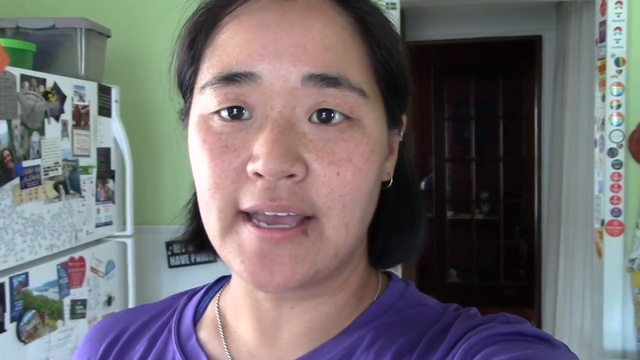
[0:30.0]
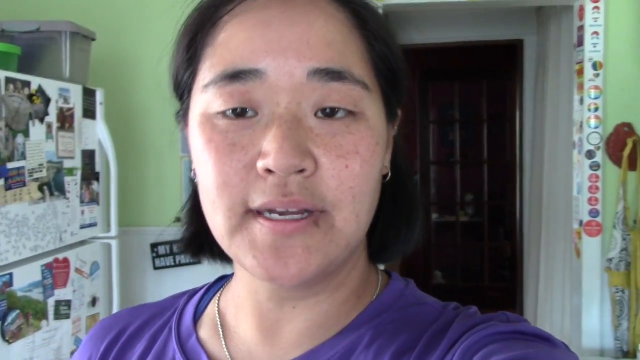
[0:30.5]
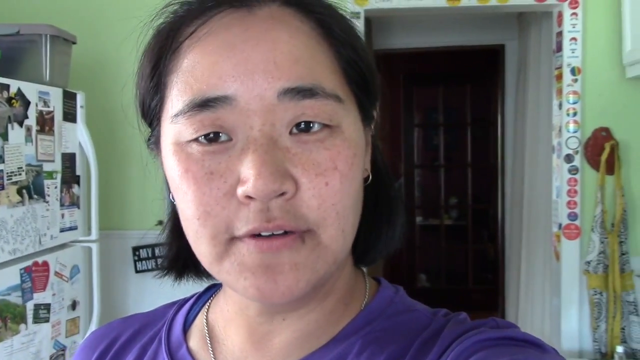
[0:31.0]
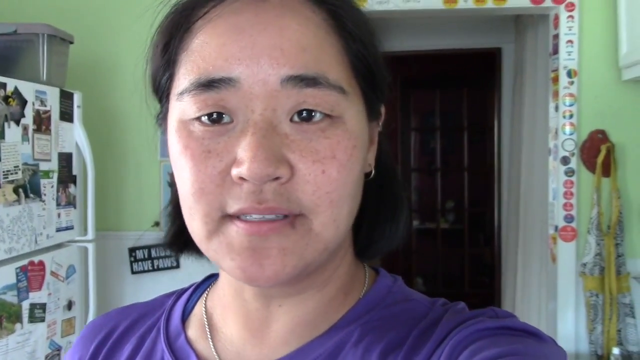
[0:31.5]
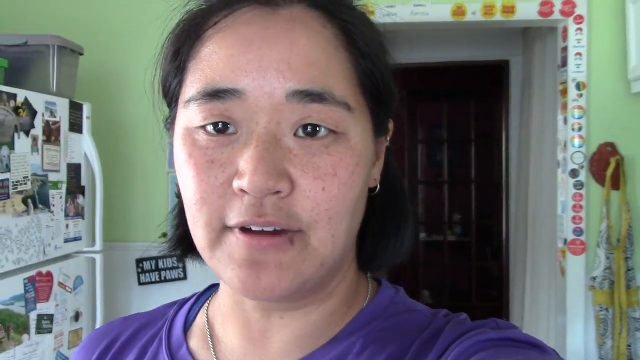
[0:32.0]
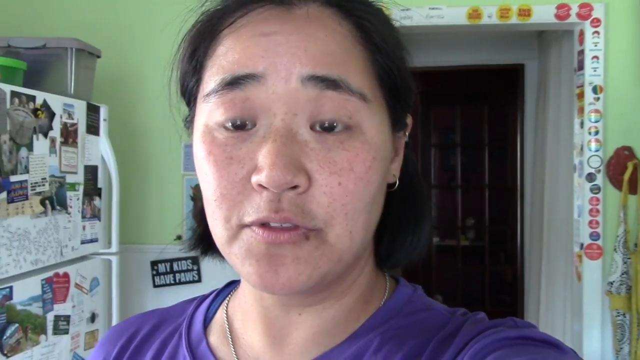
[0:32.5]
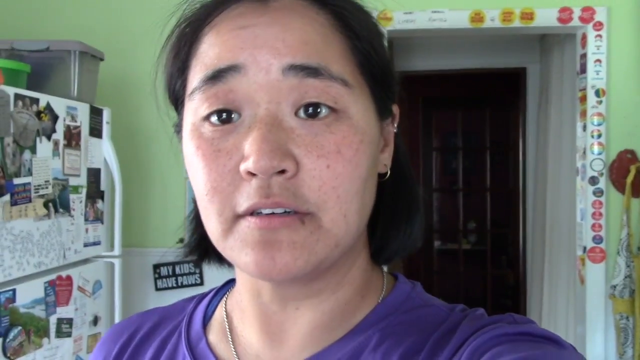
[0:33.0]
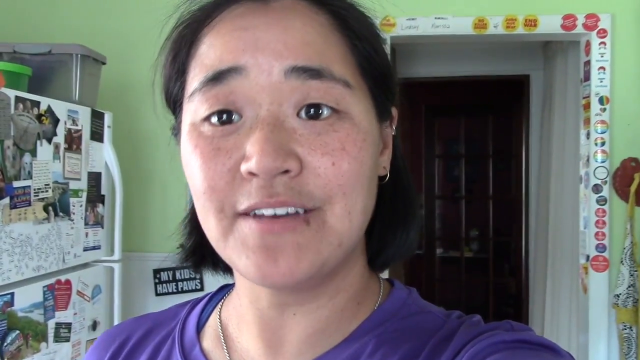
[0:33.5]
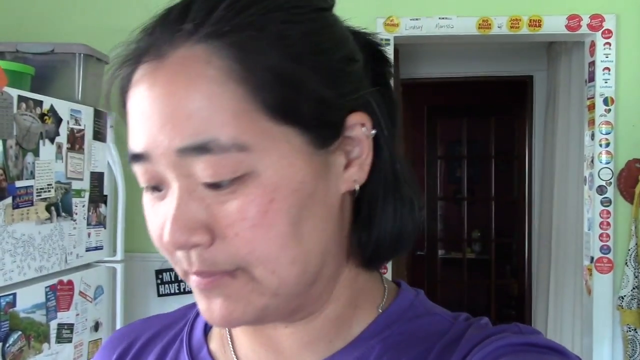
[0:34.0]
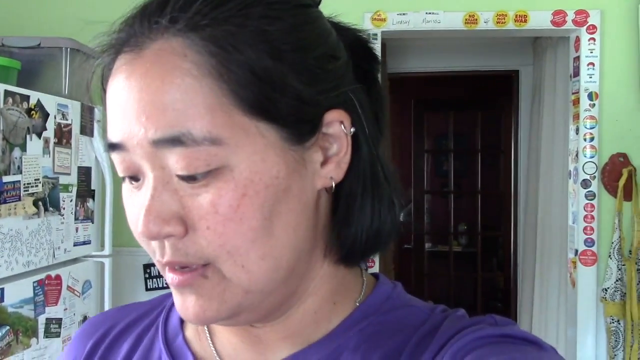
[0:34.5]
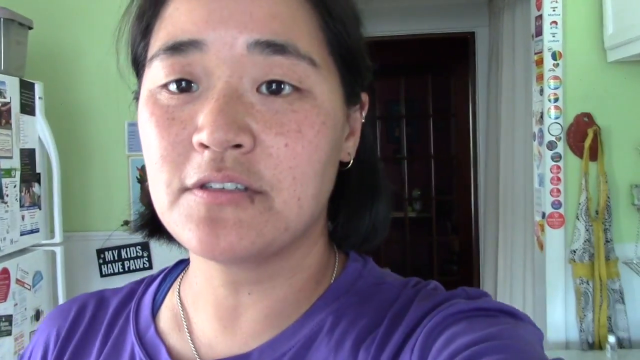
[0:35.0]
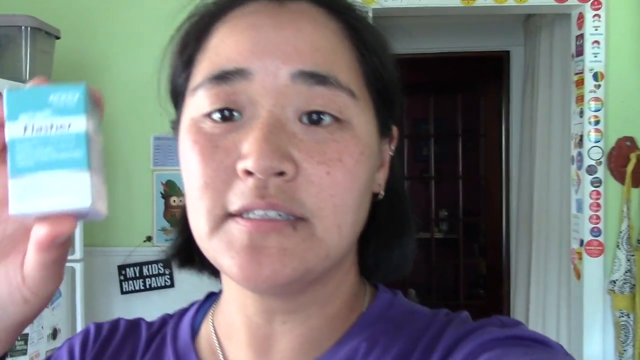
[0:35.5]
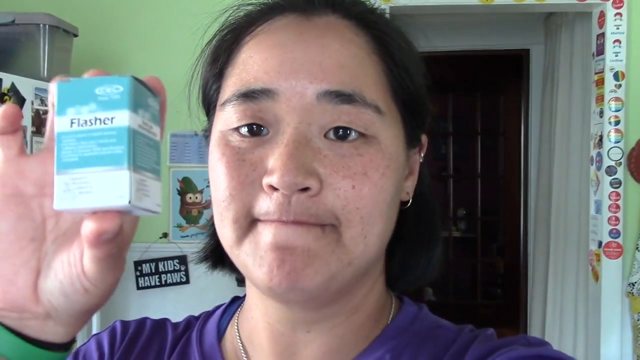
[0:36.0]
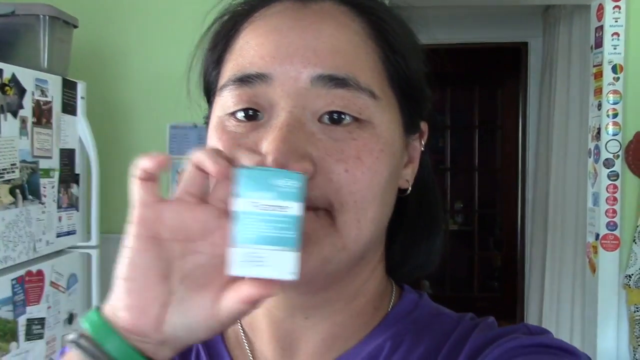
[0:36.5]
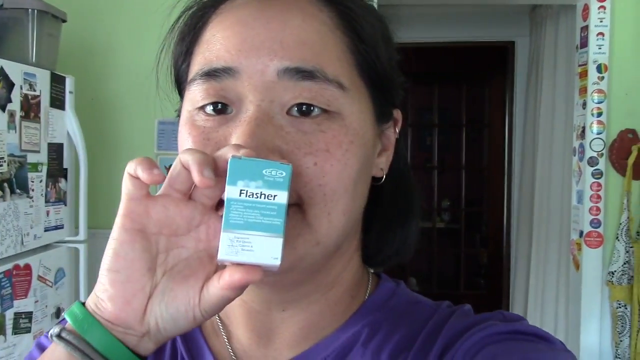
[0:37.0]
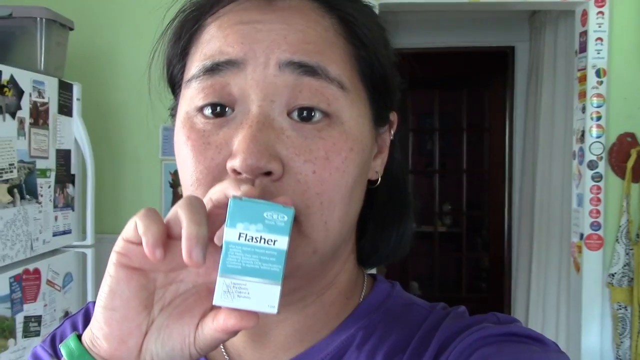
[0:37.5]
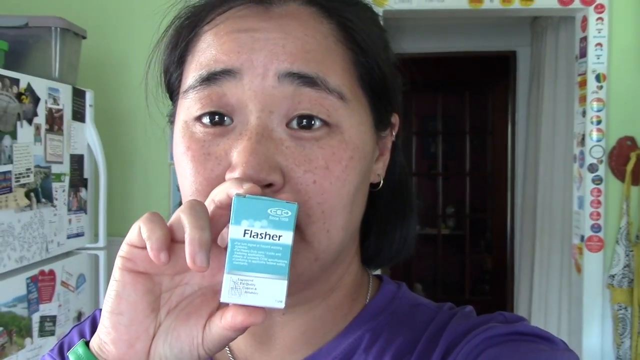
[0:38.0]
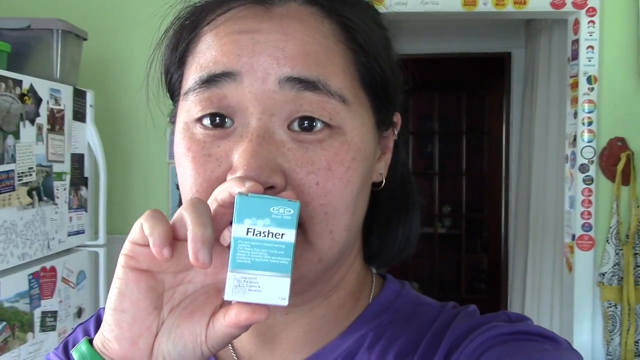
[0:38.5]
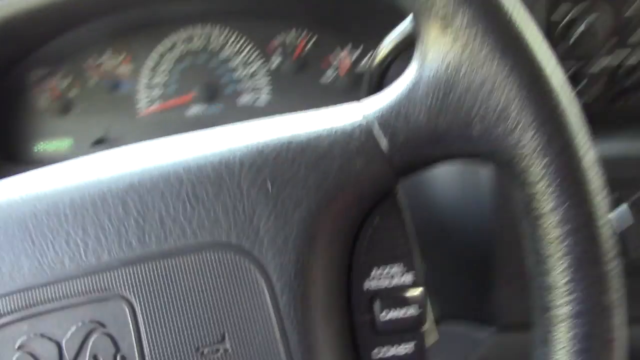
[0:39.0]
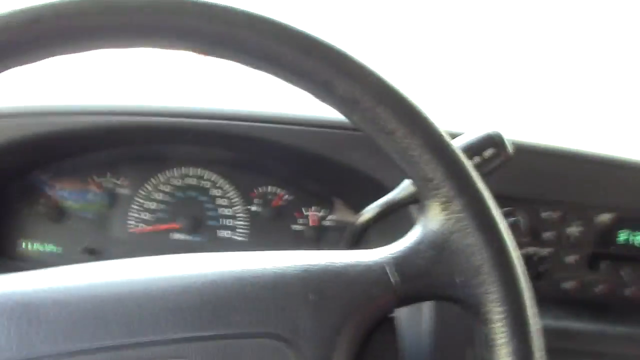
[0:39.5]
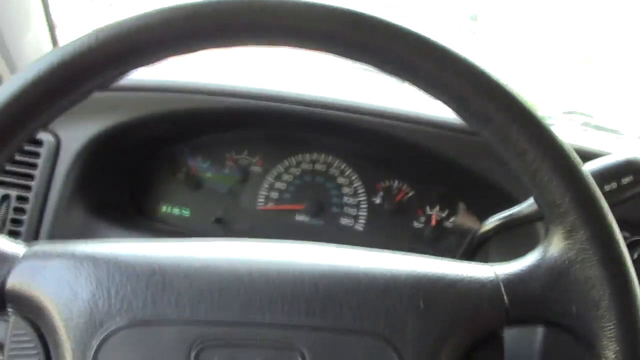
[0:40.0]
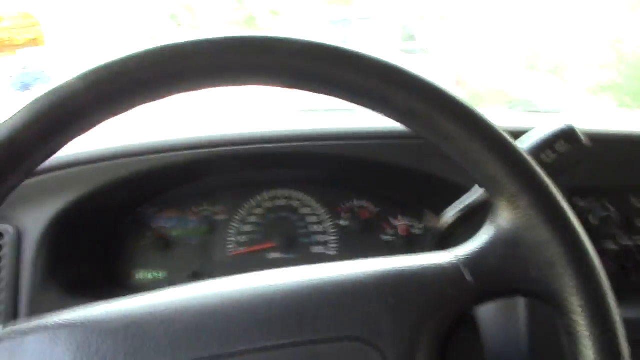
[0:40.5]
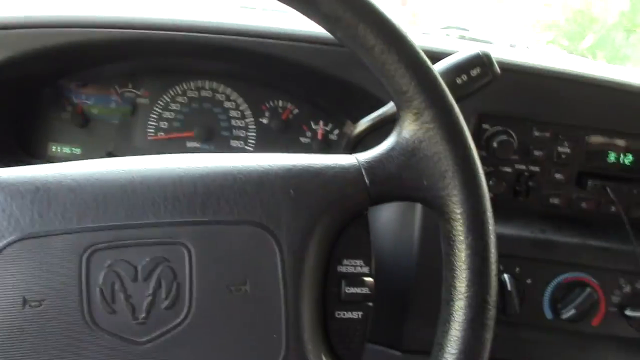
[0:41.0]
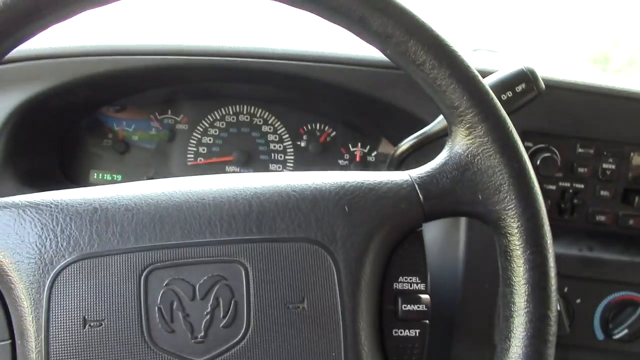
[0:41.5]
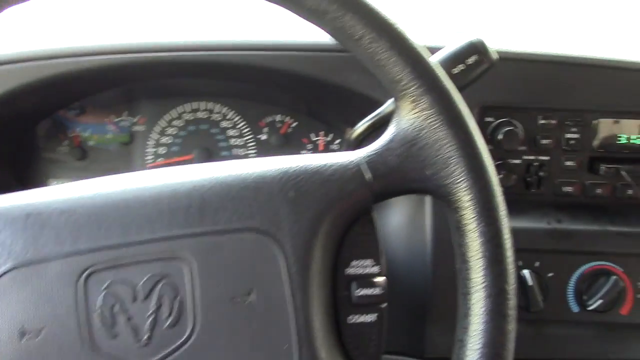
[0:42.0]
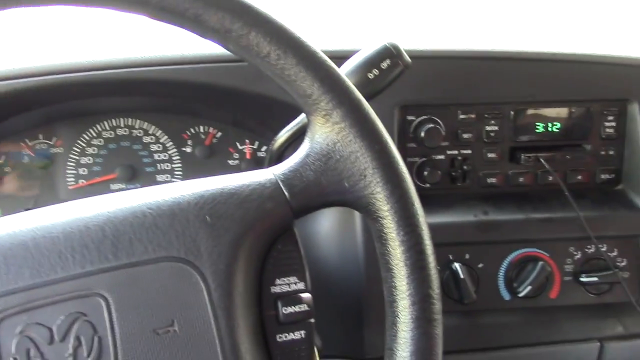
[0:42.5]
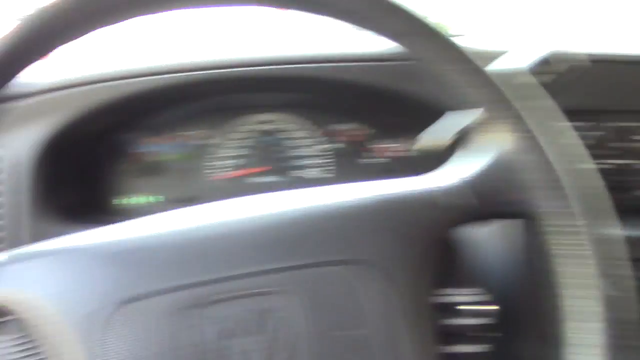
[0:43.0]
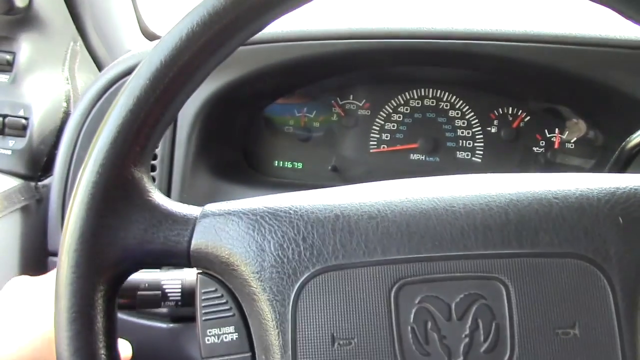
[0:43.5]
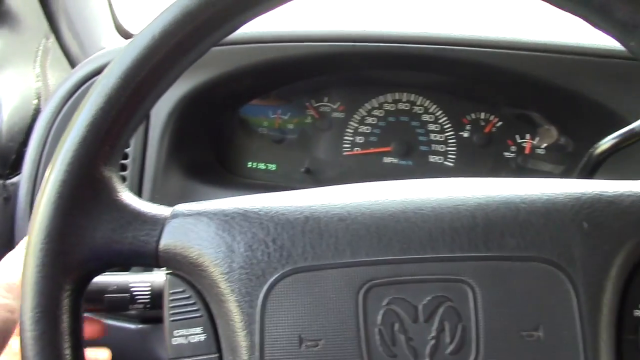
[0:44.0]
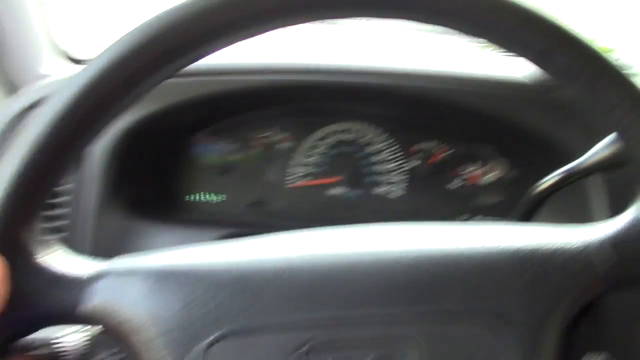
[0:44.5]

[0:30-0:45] The woman continues speaking, then holds up a blue rectangular box from her right hand, probably the same blue object seen earlier. The box says "Flasher". She holds it in front of her face toward the camera, showing its size. The scene suddenly cuts to the inside of a vehicle, probably hers, looking at the dashboard, which shows it is a Dodge Ram, so it is probably a truck rather than a car. The camera is not very steady. She tries to use the turn signal.